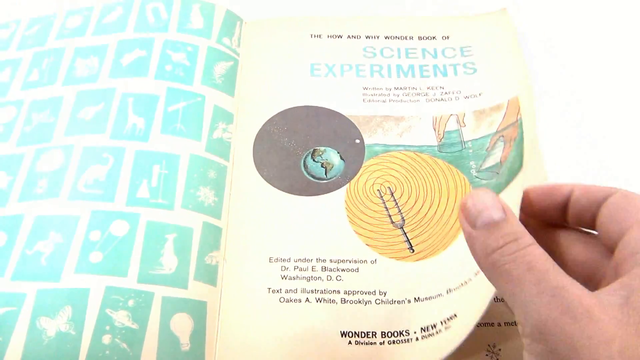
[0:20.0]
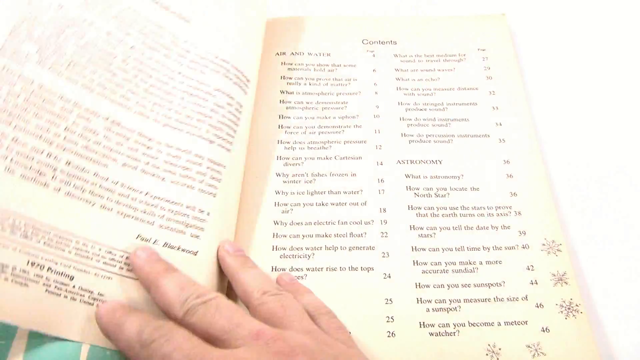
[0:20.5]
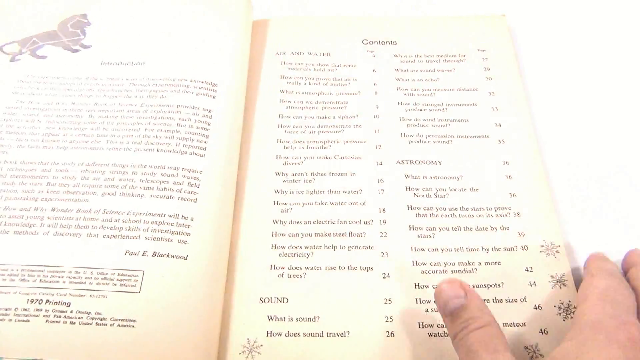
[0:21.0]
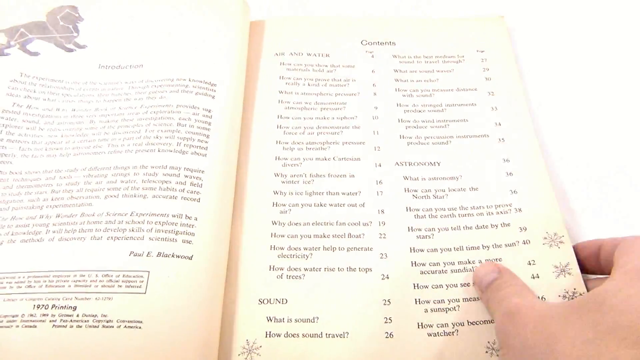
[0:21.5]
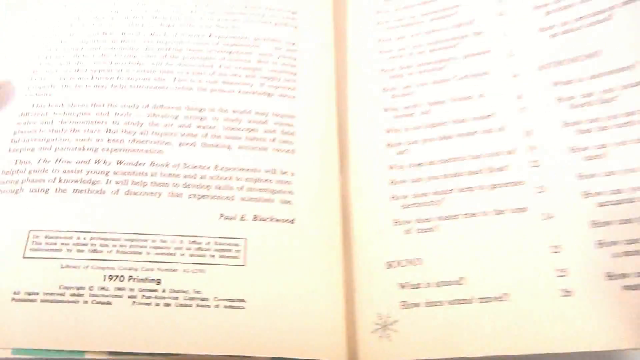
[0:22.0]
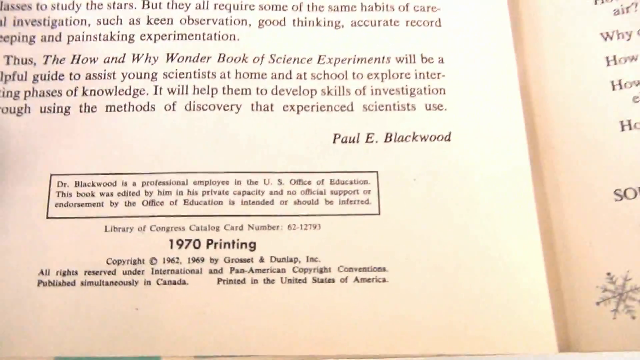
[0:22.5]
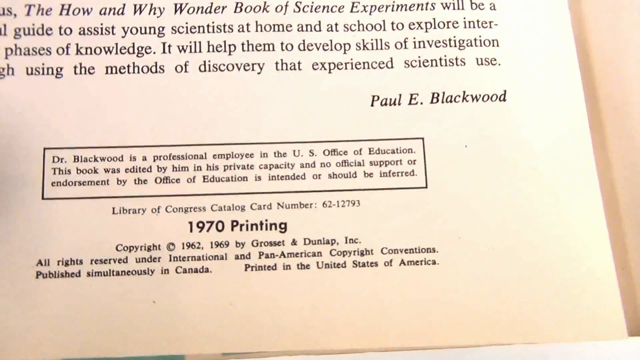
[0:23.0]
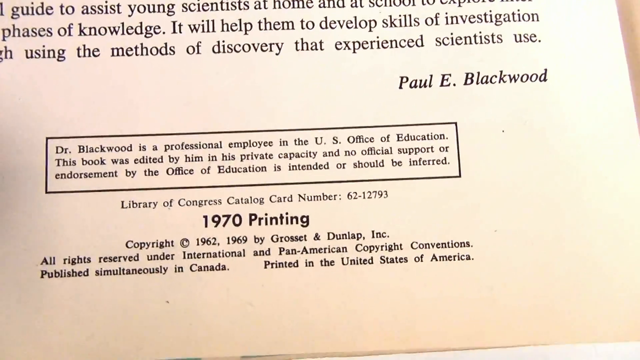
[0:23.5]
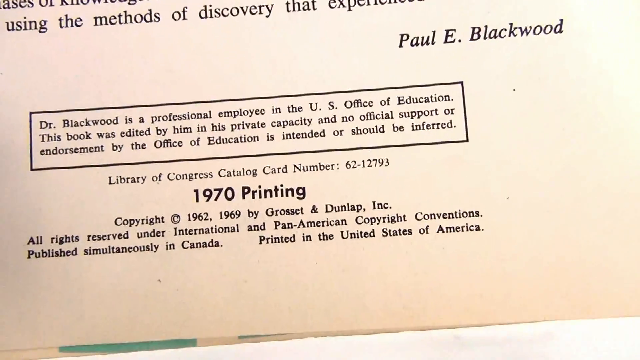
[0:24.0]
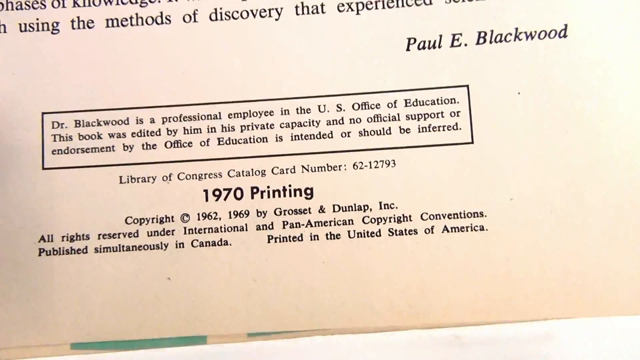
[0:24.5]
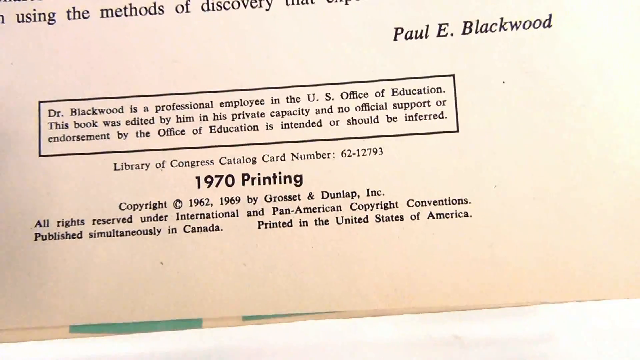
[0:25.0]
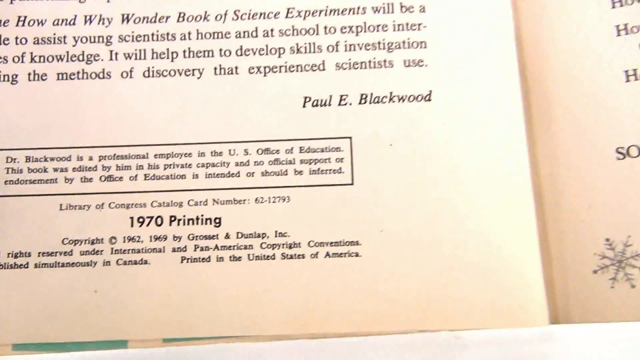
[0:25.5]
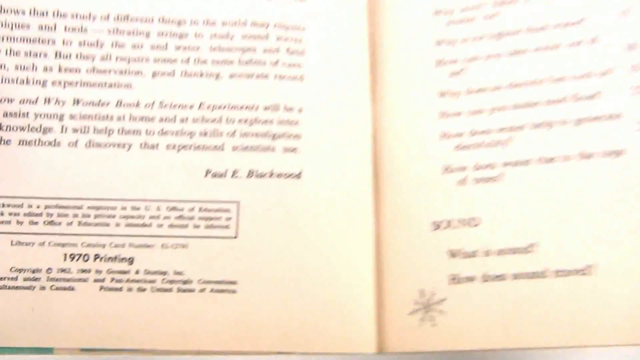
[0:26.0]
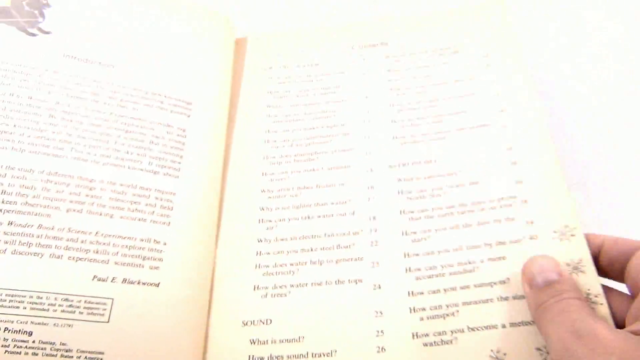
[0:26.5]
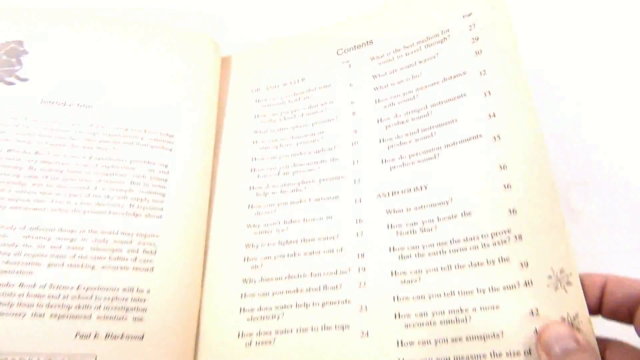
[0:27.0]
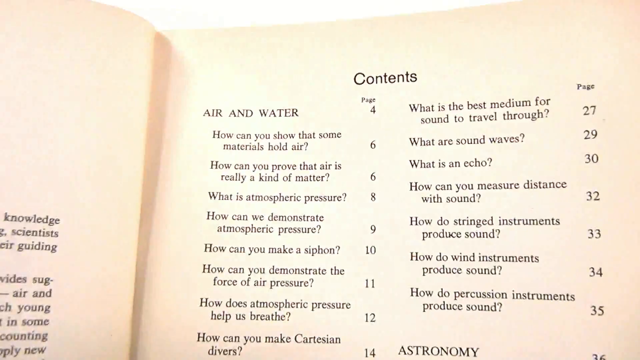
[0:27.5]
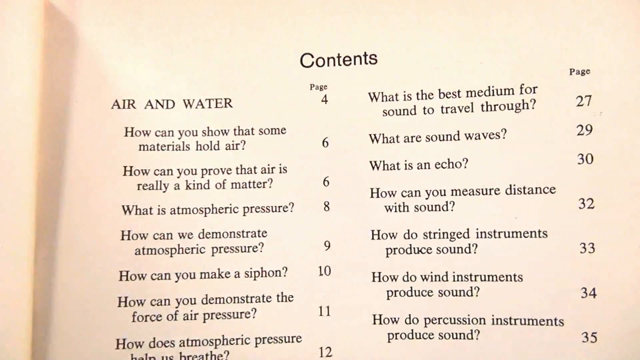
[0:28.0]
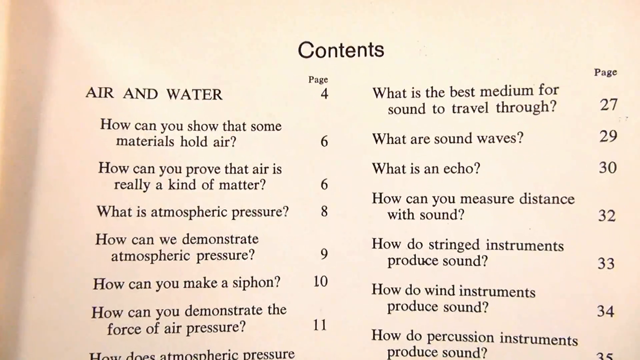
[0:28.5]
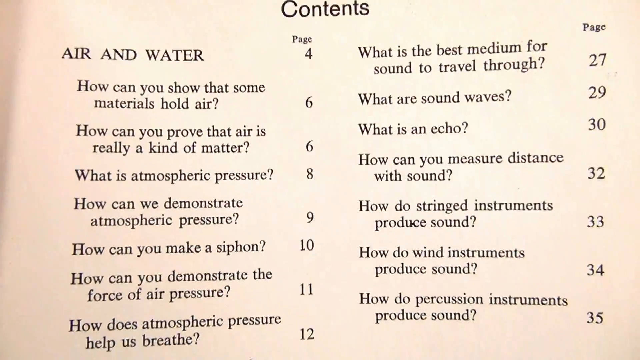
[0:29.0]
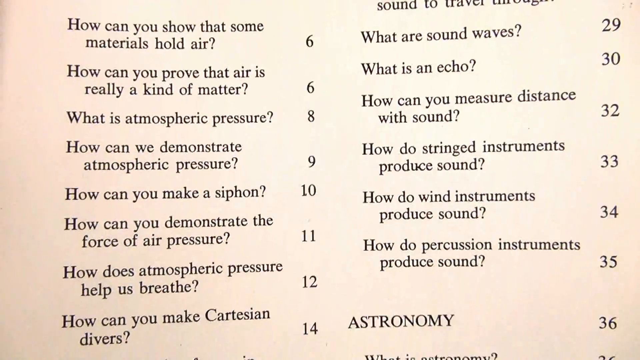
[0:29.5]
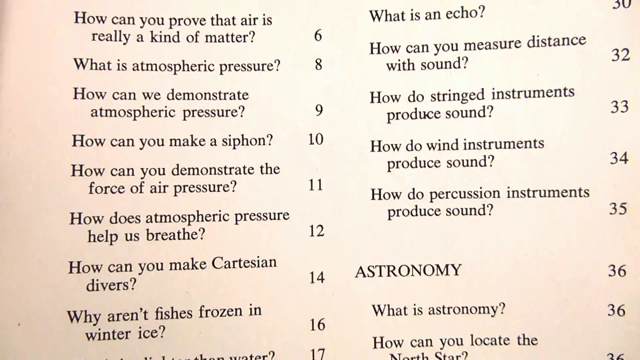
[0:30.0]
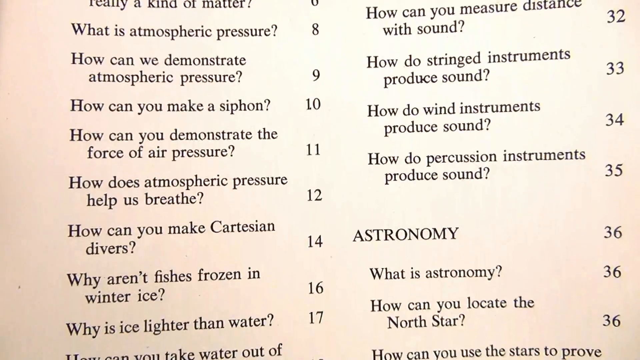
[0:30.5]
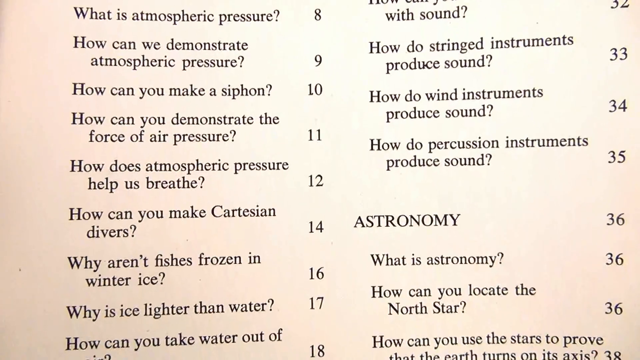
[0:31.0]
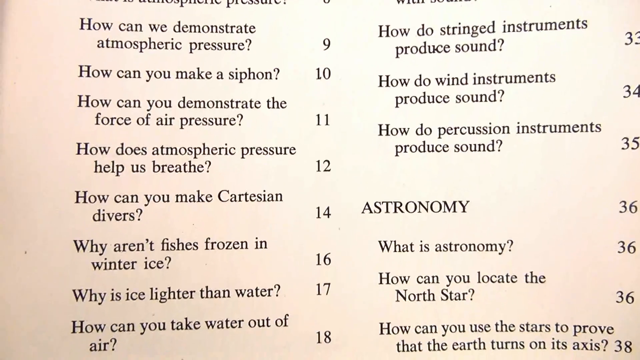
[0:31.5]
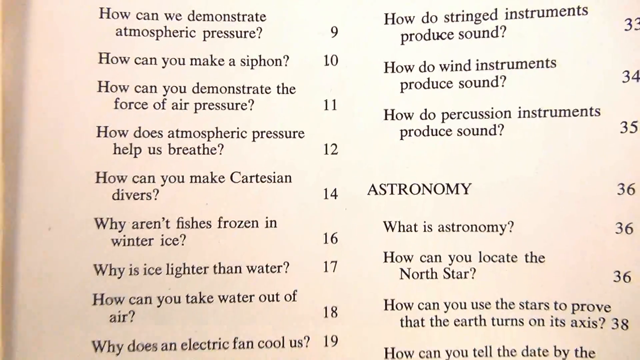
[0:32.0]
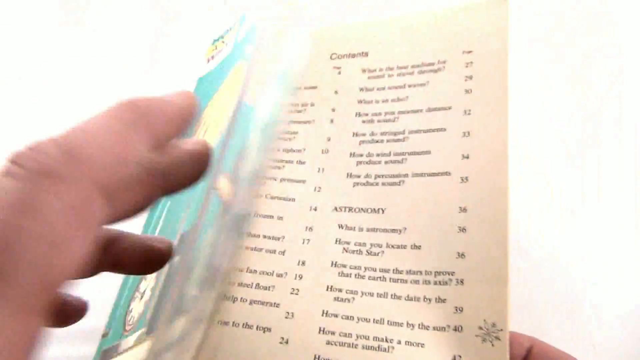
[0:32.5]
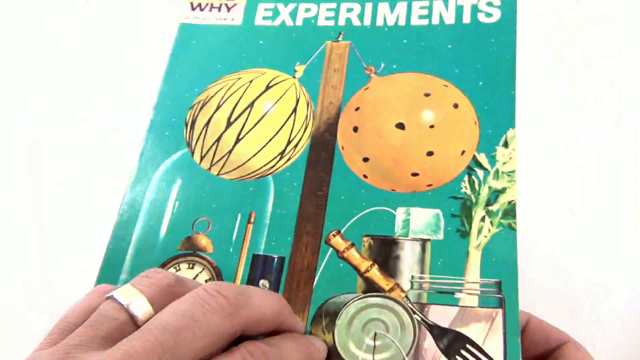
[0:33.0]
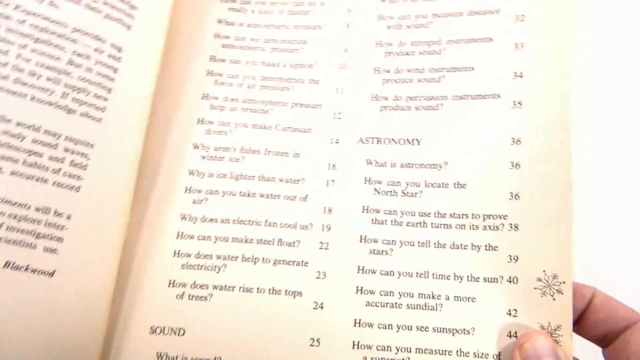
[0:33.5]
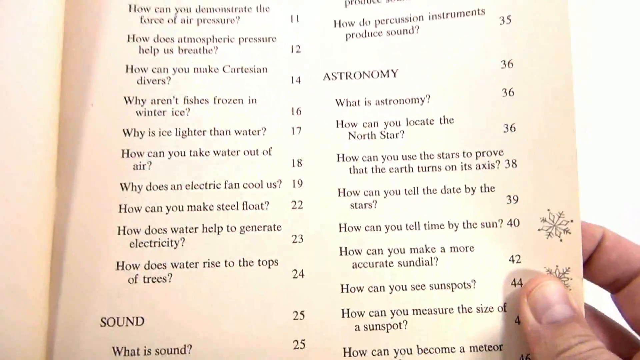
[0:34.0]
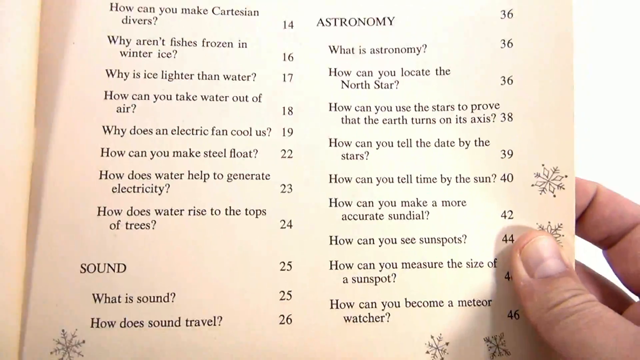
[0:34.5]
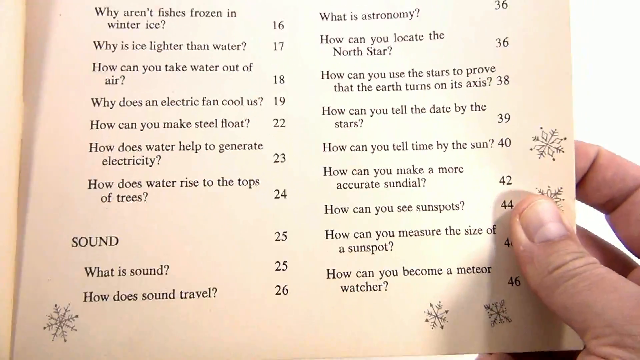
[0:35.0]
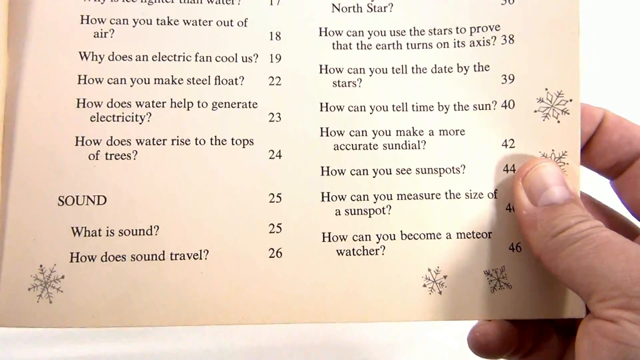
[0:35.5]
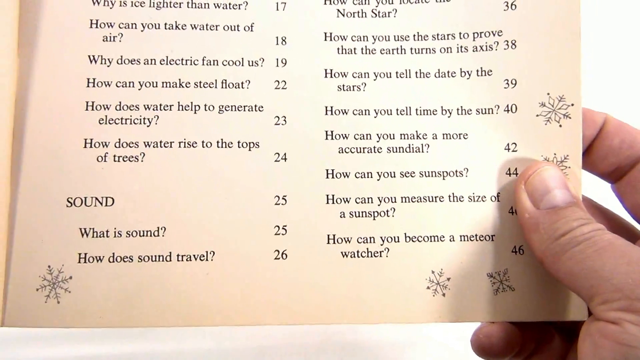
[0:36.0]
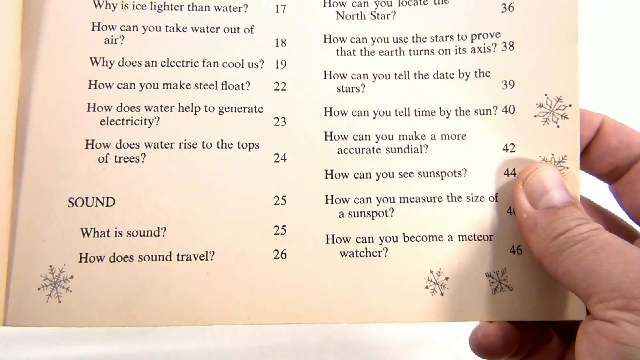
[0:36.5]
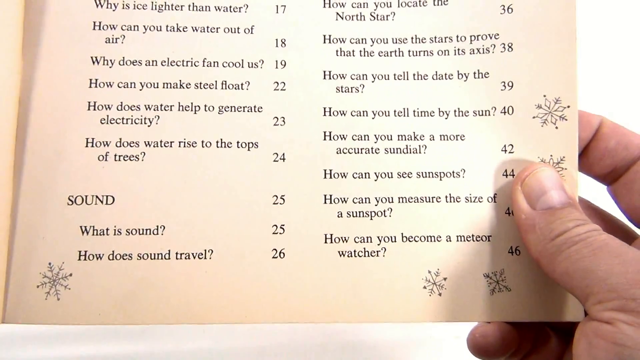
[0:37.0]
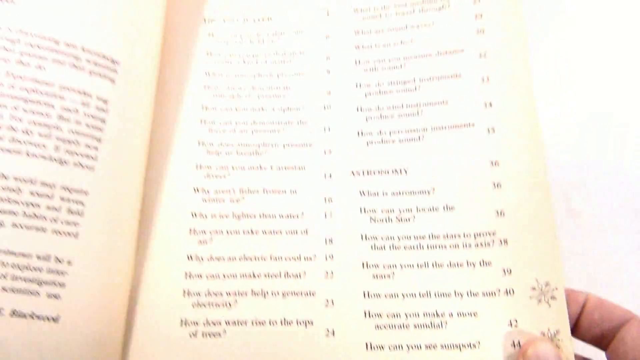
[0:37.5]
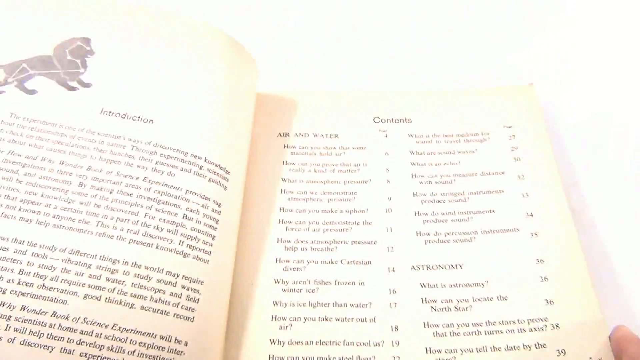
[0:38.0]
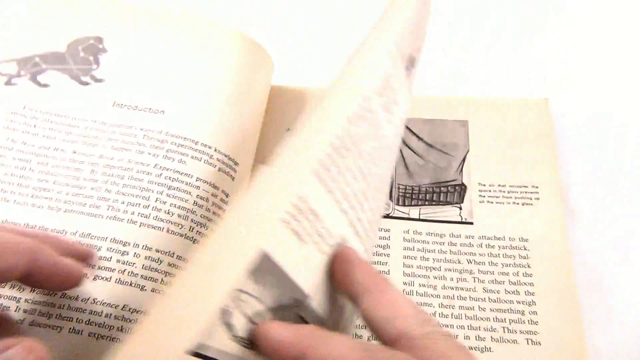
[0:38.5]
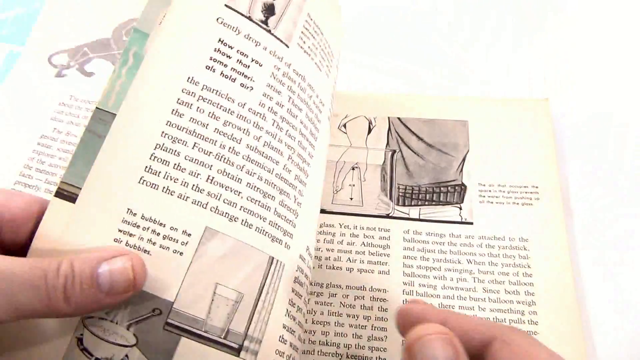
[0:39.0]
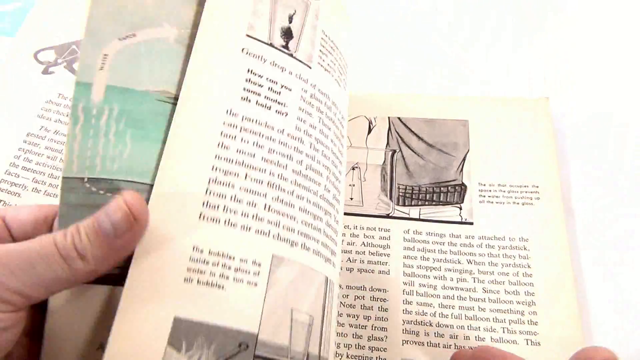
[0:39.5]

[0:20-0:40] An open book, magazine or pamphlet shows "science experiments" in large capital letters. Under it is a gray ball with a little opening that almost looks like a moon, and sideways and down from it is a yellow ball with lines in it and some type of pitchfork. A hand holds the pamphlet and looks like it is about to turn the page. The left of the pamphlet is mostly white space, with many off-blue and off-green rectangles containing shapes and animals. The page is flipped, and a close-up of the left side shows "1970 printing". A close-up of the right side shows "contents", and moving down there are many numbers. He closes the book and shows the cover, then goes to the very bottom, where a sentence reads "what is sound". He turns the page, and there appear to be pictures on it.